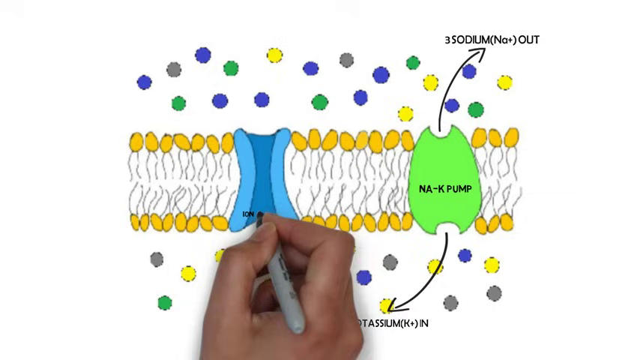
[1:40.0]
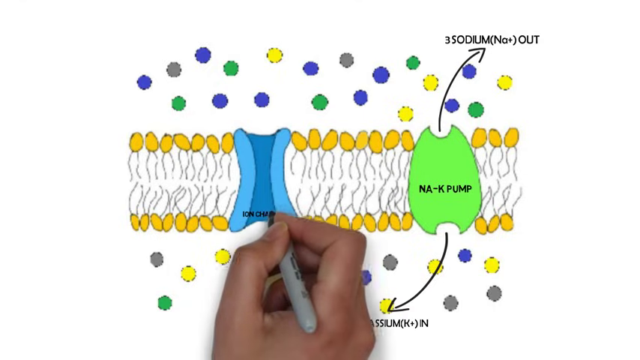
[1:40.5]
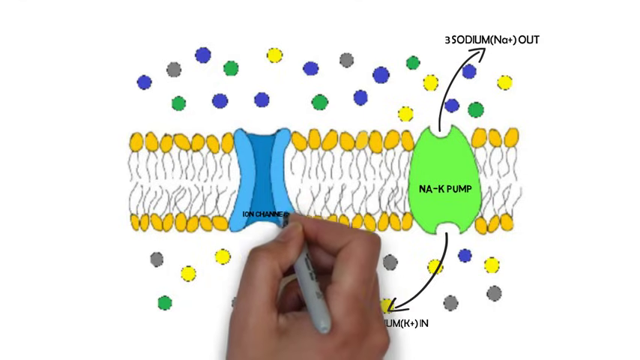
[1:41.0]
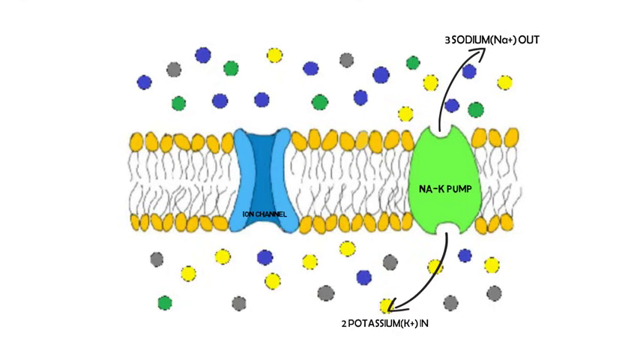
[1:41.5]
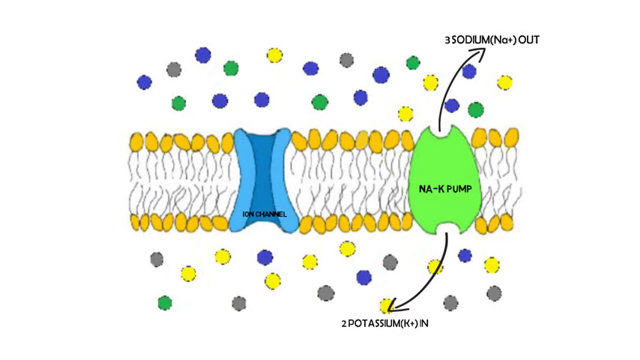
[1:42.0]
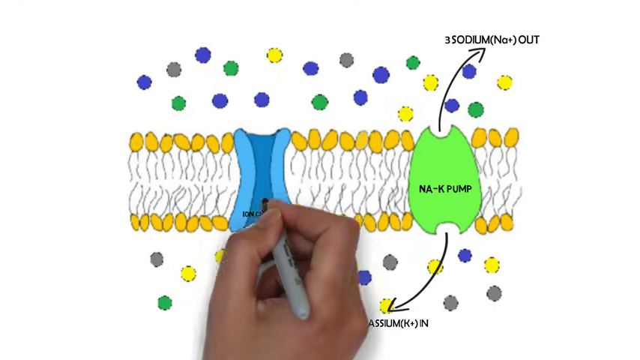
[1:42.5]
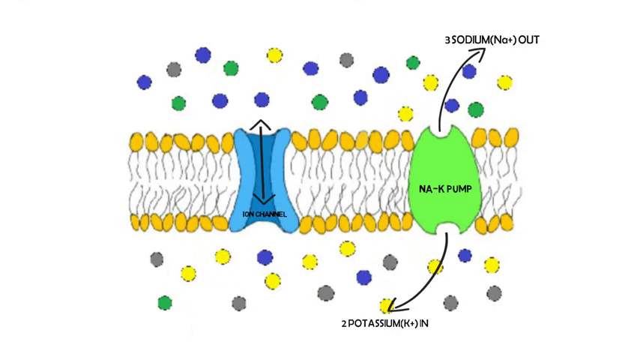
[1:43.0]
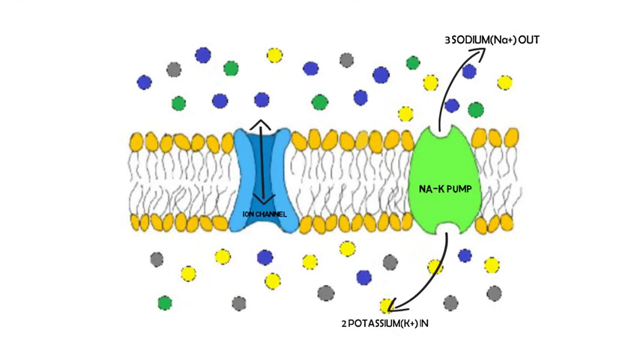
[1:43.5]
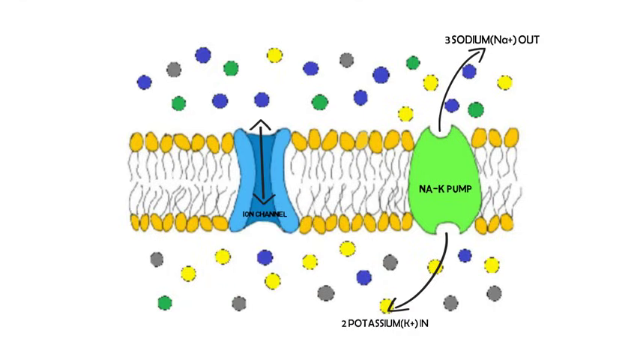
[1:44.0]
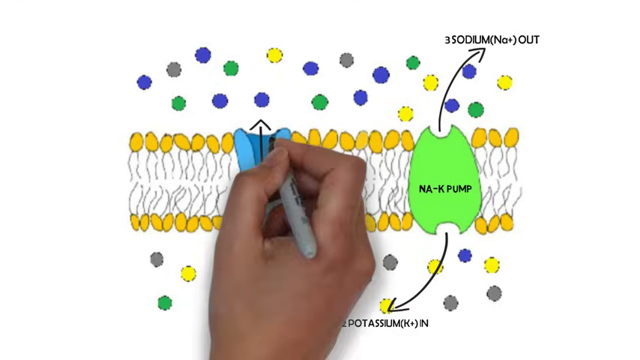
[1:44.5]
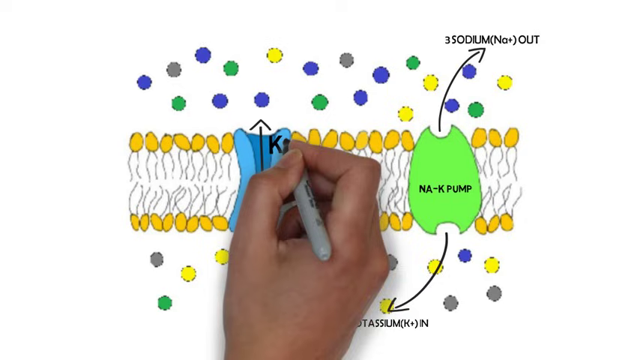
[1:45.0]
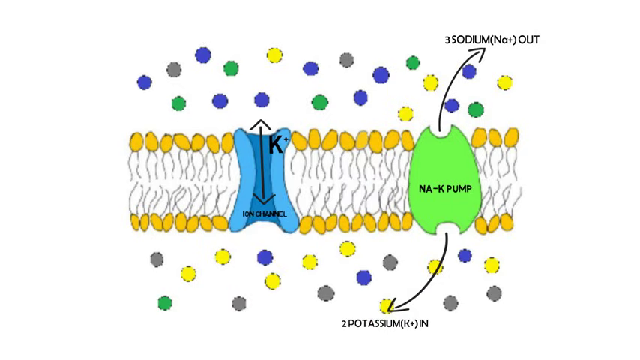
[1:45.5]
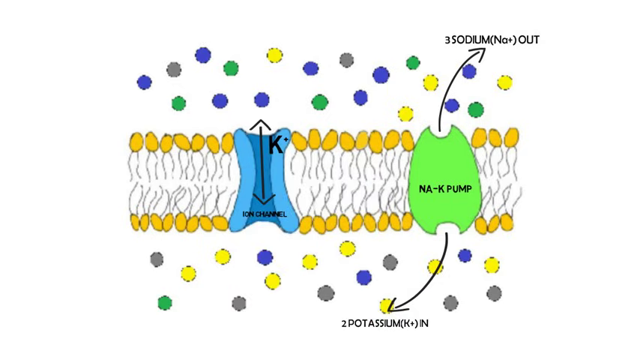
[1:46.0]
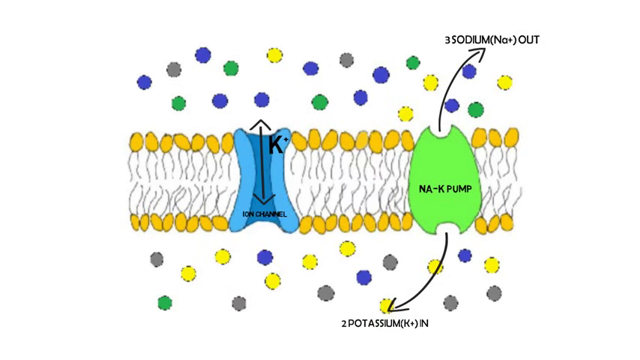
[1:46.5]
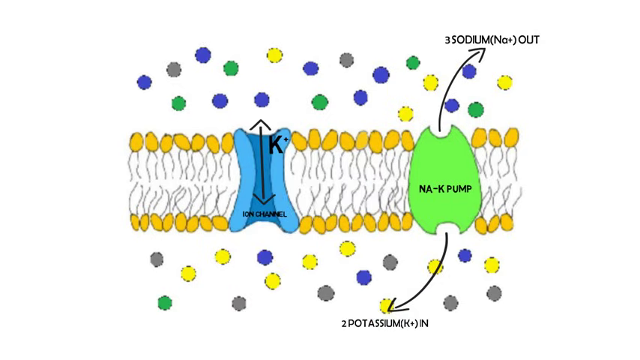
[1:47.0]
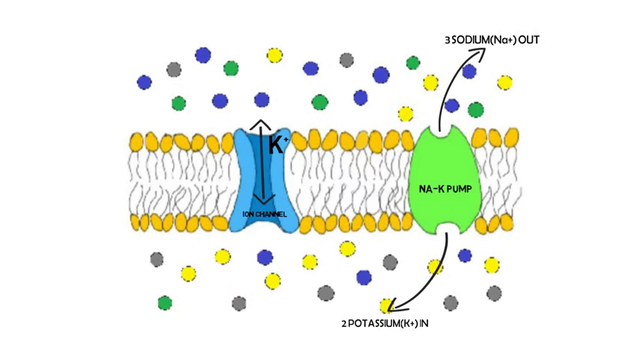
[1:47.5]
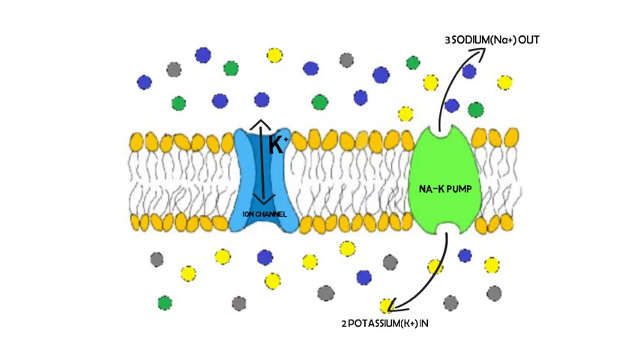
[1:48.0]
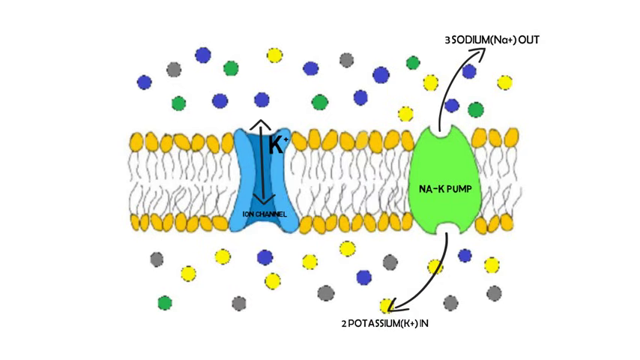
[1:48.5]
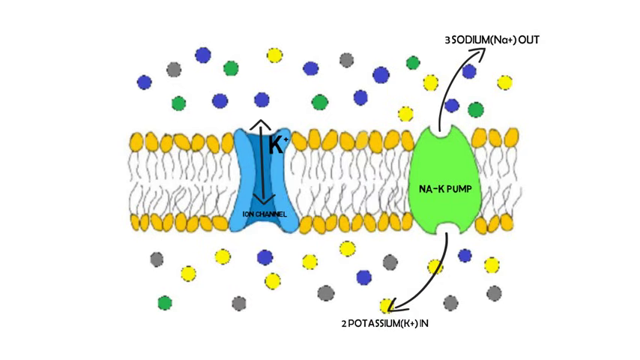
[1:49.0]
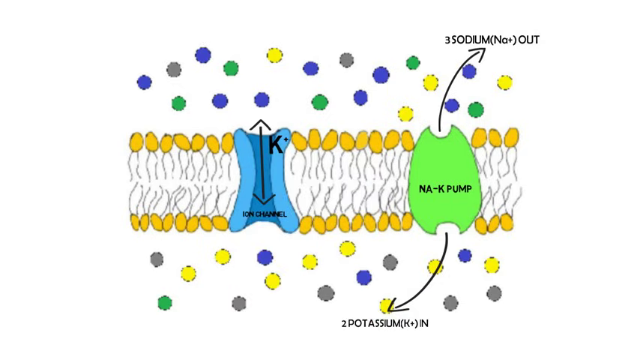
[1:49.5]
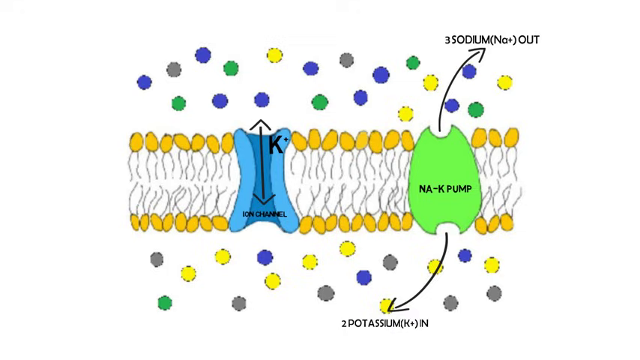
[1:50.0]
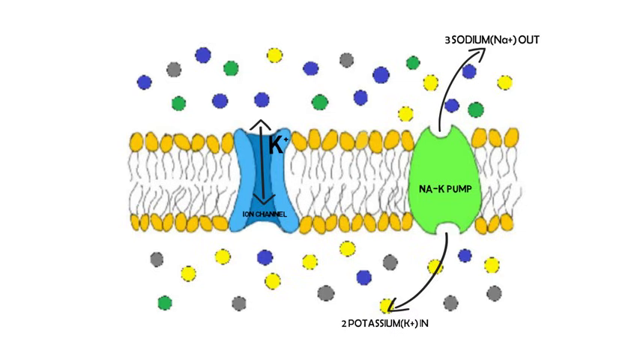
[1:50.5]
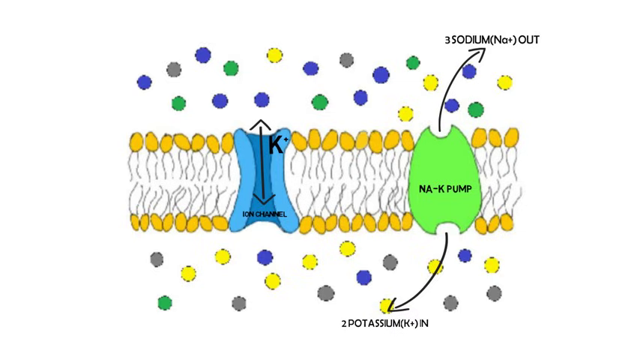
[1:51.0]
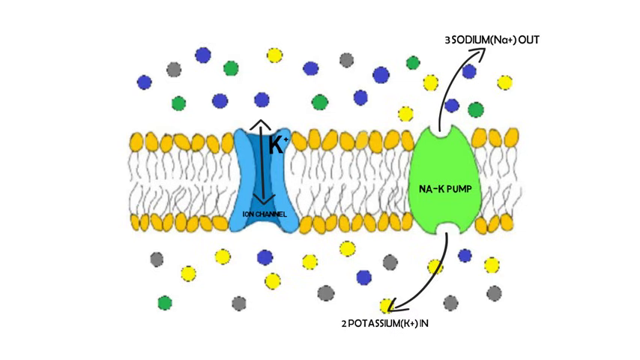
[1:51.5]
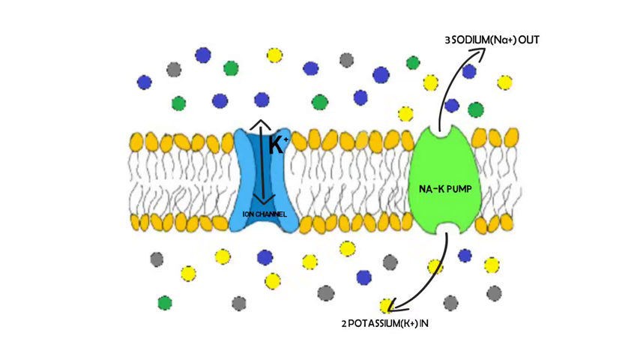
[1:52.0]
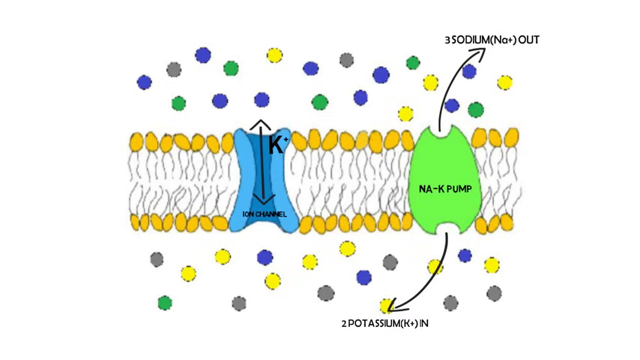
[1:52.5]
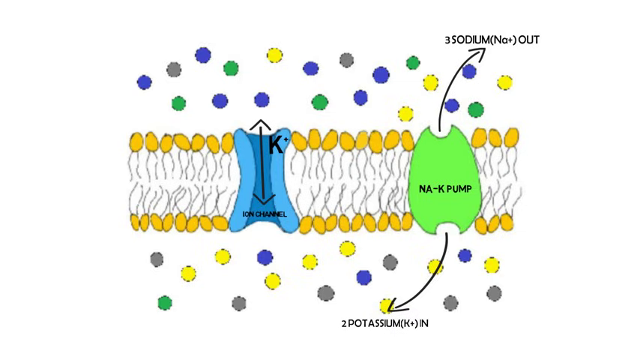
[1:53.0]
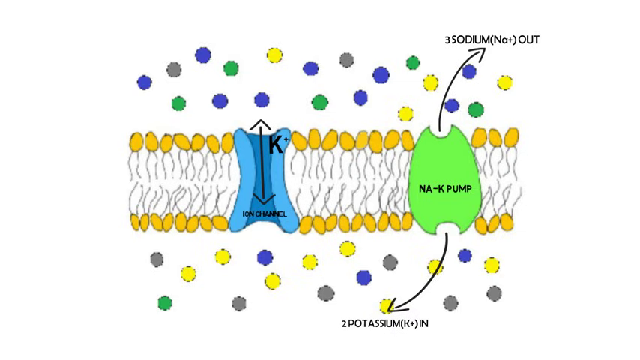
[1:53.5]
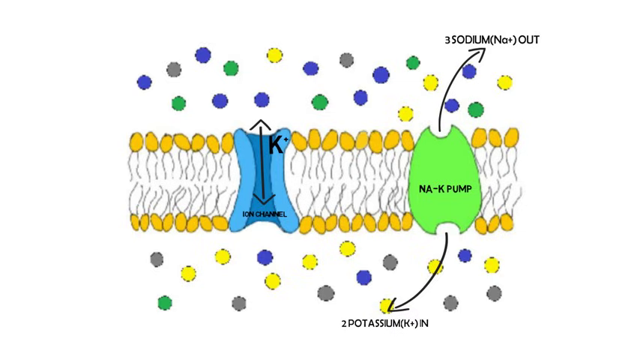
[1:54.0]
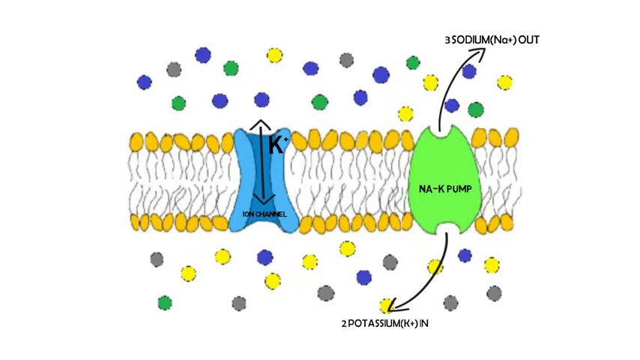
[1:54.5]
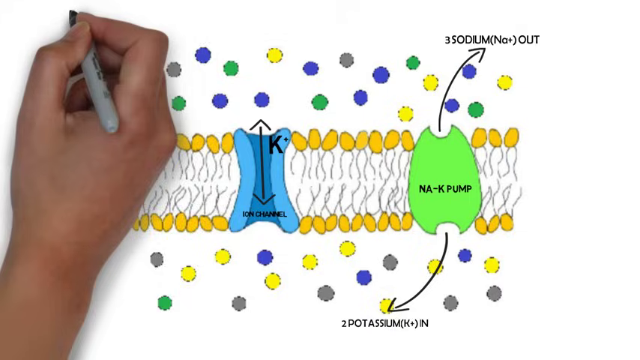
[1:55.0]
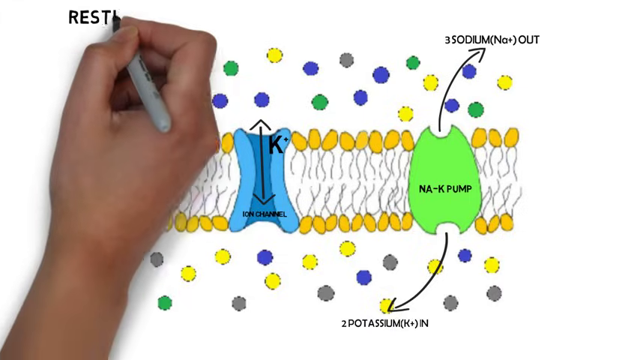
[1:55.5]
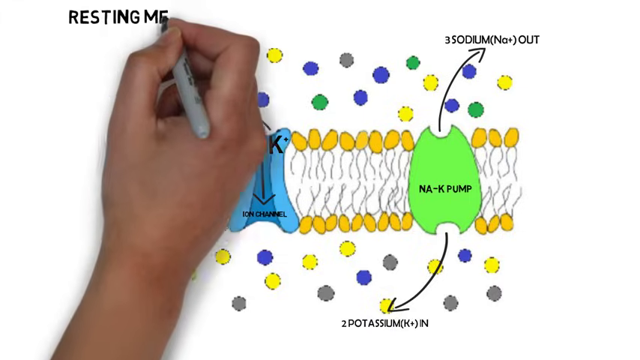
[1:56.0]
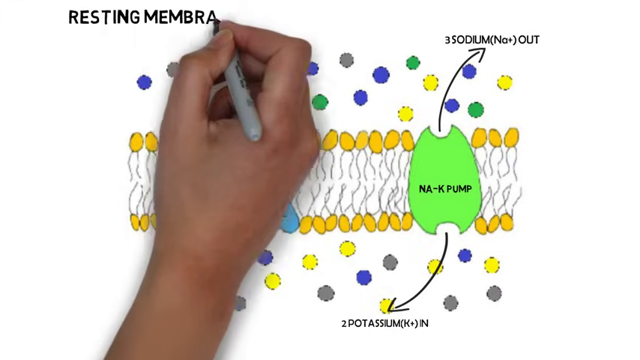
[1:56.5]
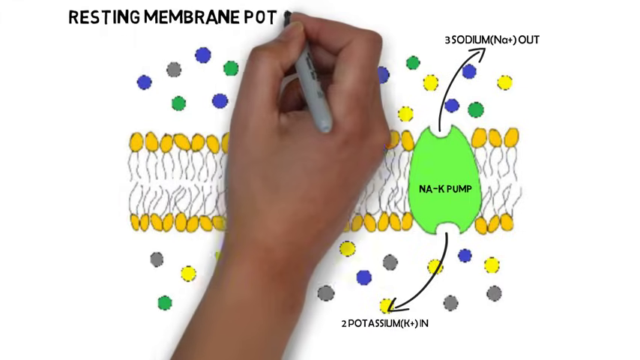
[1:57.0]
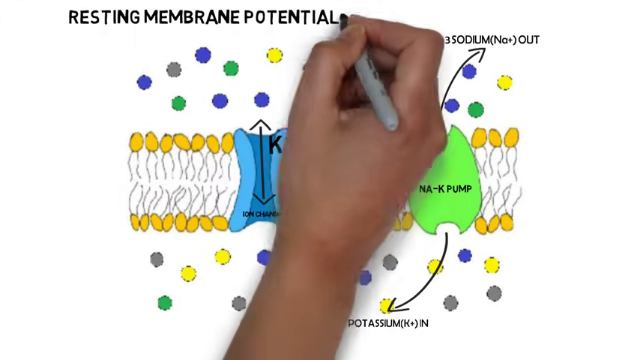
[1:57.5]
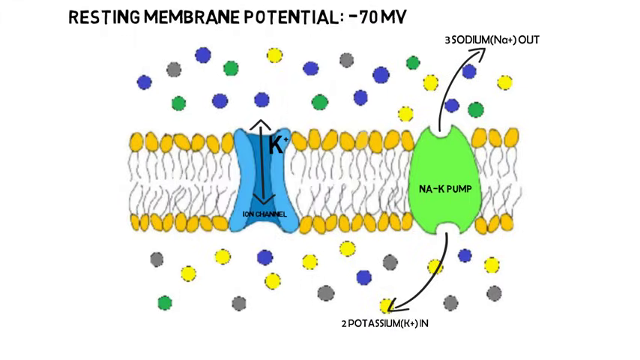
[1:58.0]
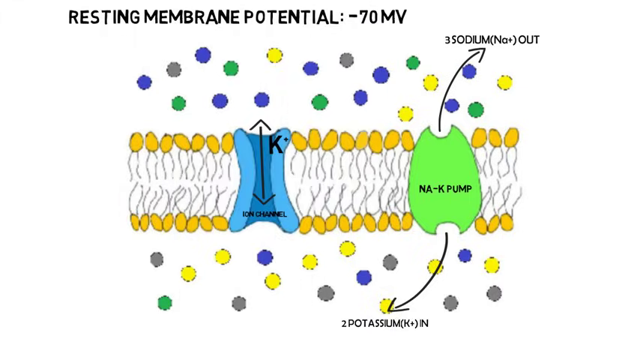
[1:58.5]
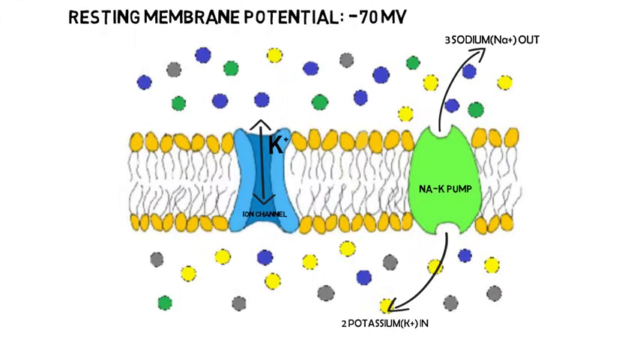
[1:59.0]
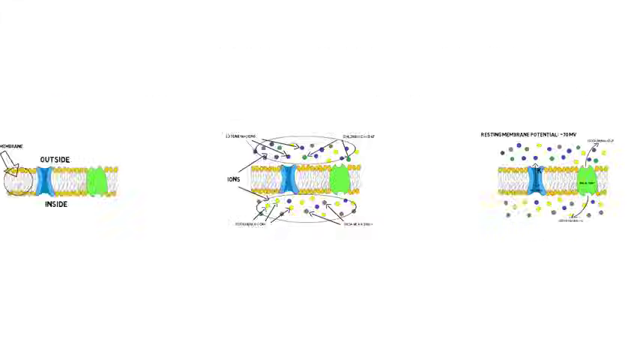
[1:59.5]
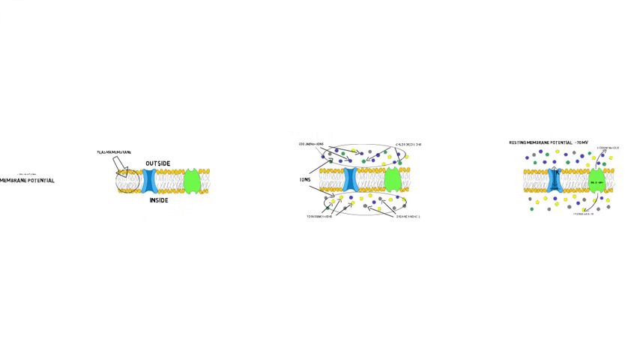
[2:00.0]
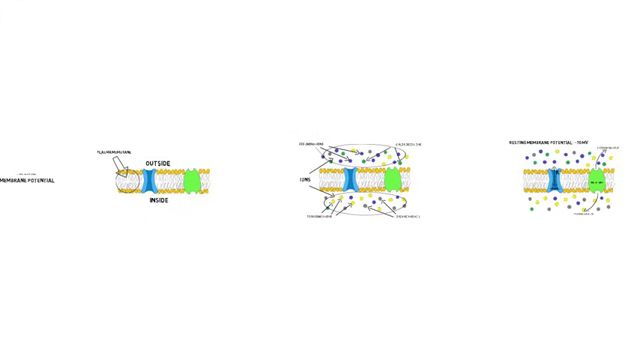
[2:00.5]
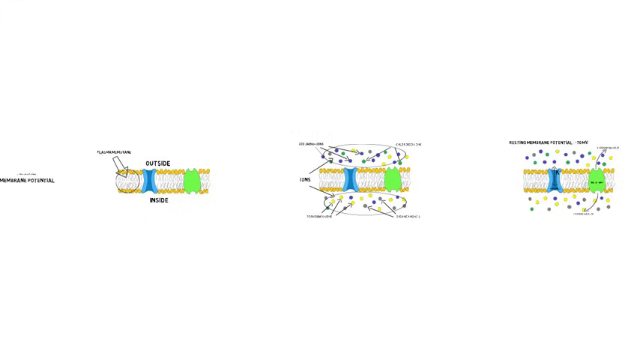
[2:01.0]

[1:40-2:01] The hand writes something unreadable at the bottom with an arrow pointing upward and the letter K with a plus. At the top left it writes "resting membrane potential -70 MV". The blue membrane is labeled an ion channel, with an arrow pointing both up and down, apparently showing that ions can move up and down through it, as with the sodium-potassium pump. The channel is shaped a little differently and is a different color; its inside is visible, and it looks like an opening that is wide at the top and bottom and narrows in the middle. The letter K is written with a dot where an exponent would be, and "ion channel" is written underneath. The little yellow things with tails that look like sperm are not labeled.